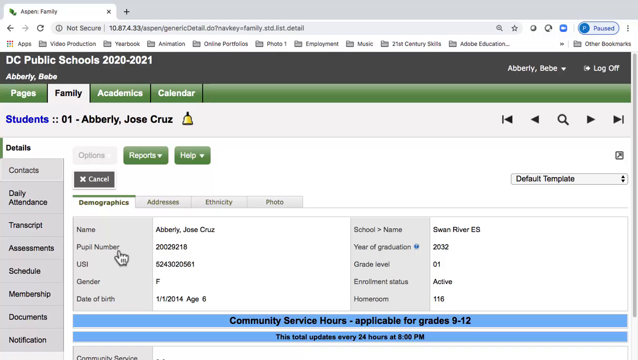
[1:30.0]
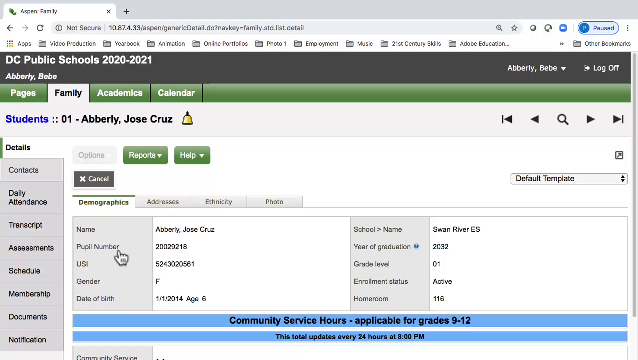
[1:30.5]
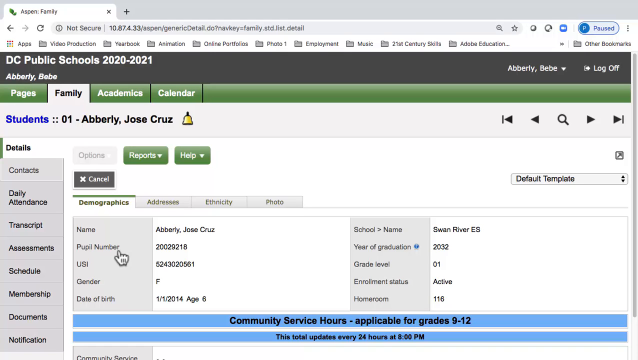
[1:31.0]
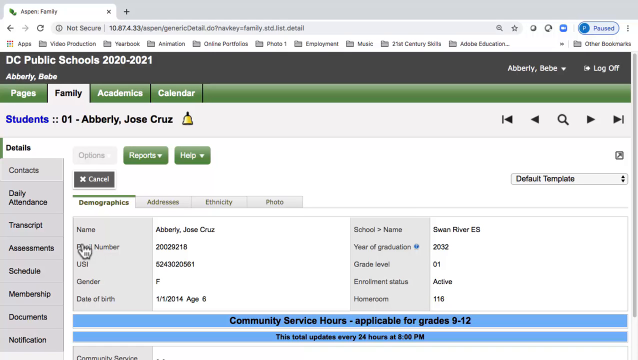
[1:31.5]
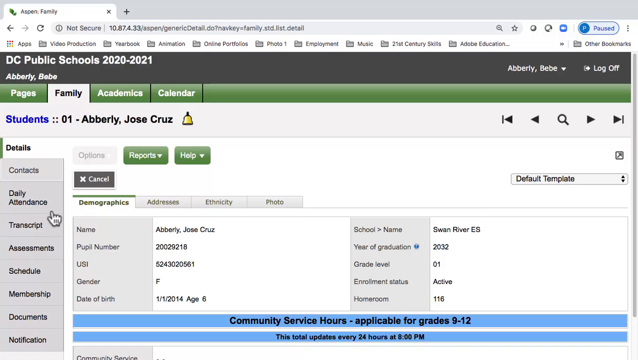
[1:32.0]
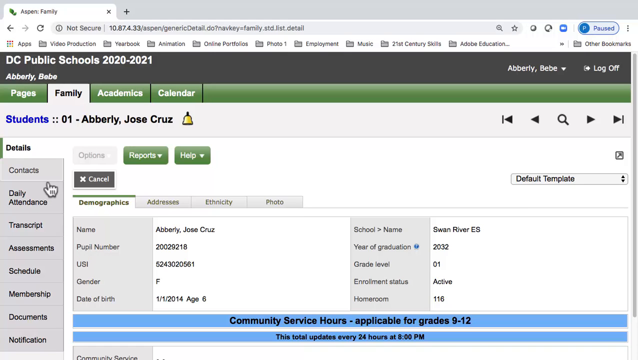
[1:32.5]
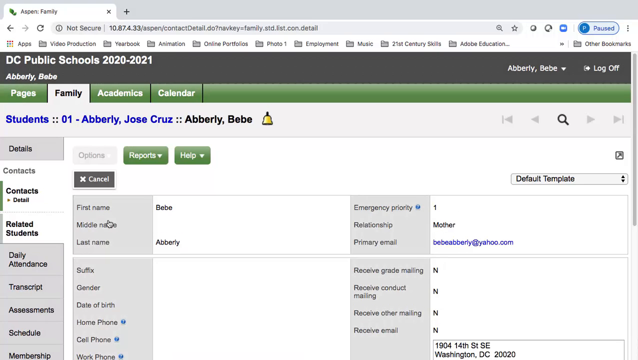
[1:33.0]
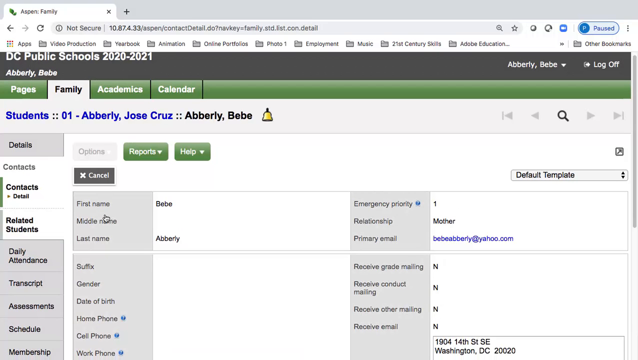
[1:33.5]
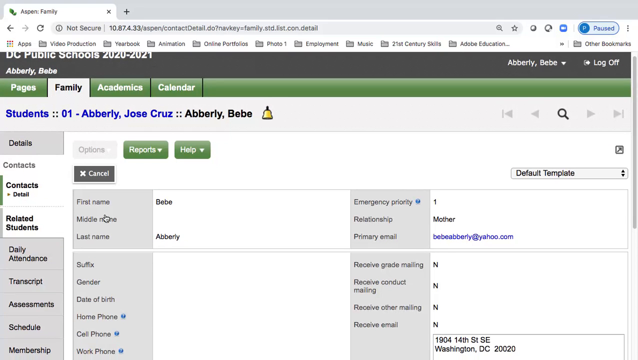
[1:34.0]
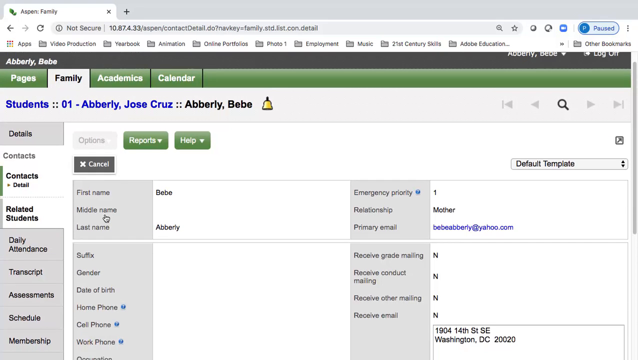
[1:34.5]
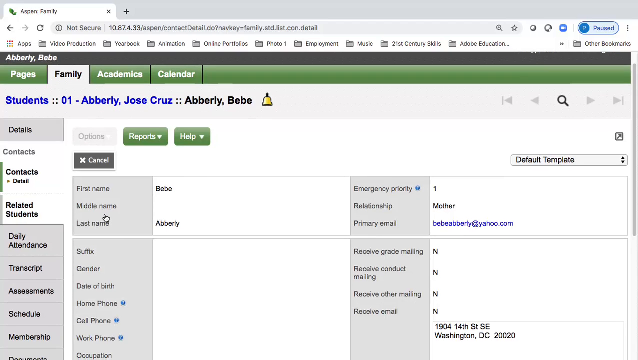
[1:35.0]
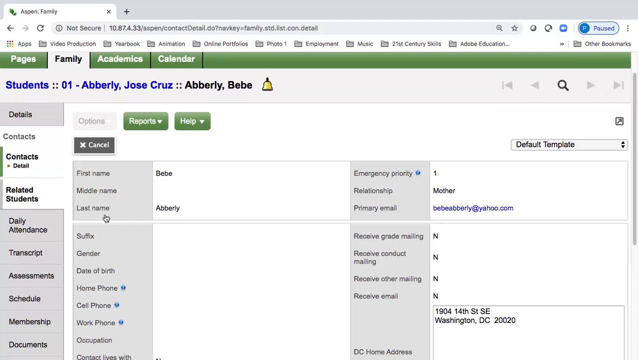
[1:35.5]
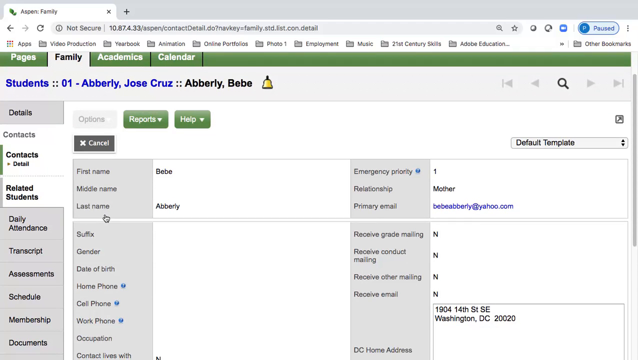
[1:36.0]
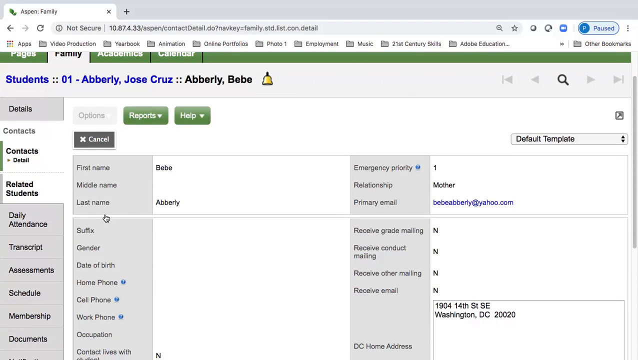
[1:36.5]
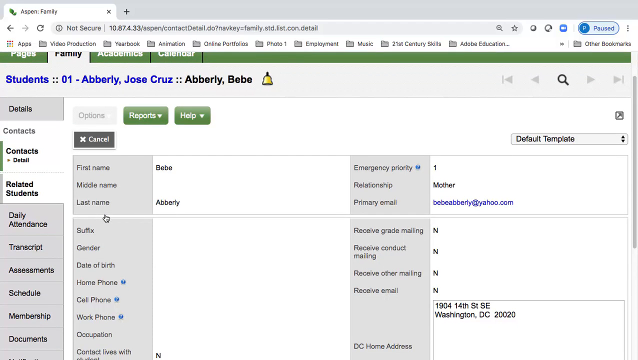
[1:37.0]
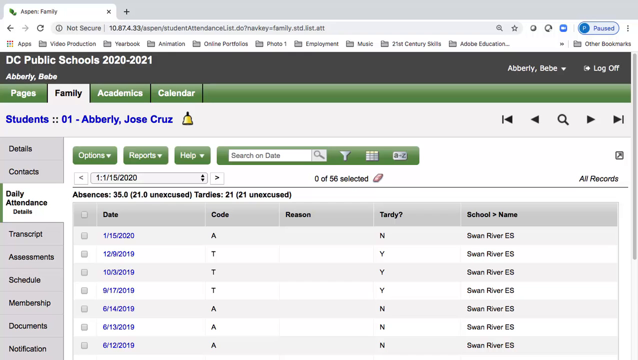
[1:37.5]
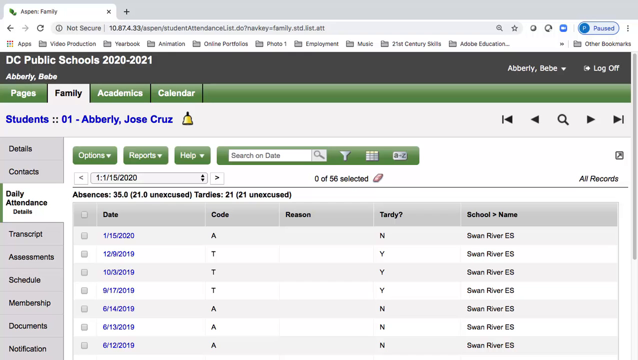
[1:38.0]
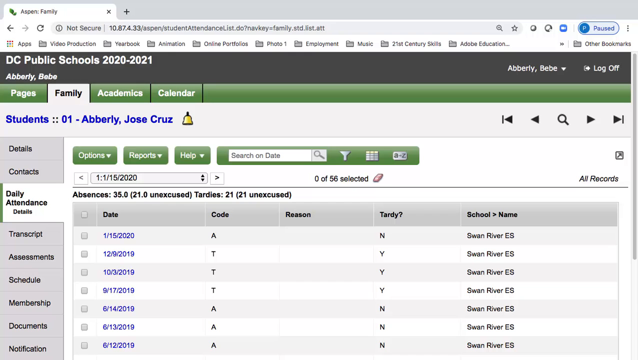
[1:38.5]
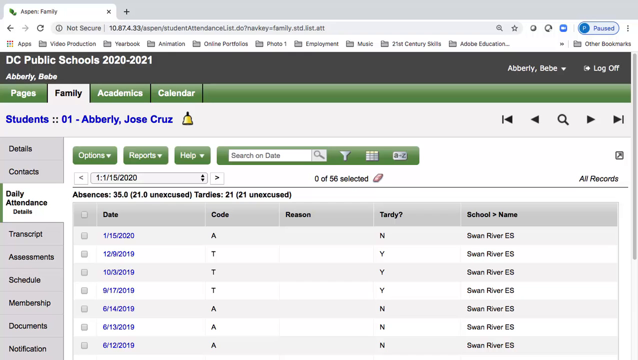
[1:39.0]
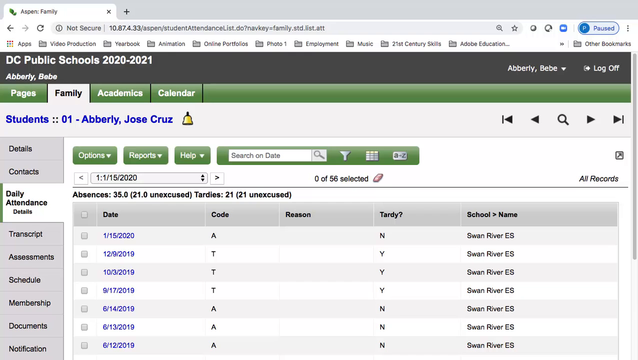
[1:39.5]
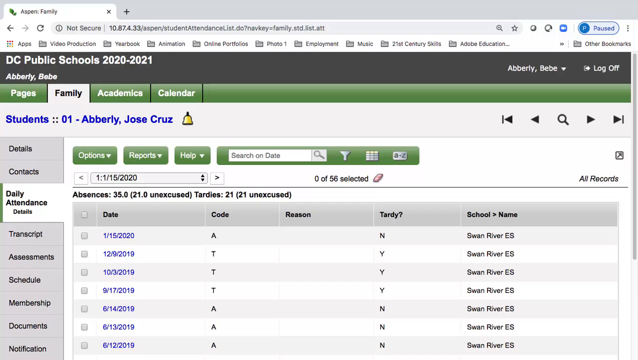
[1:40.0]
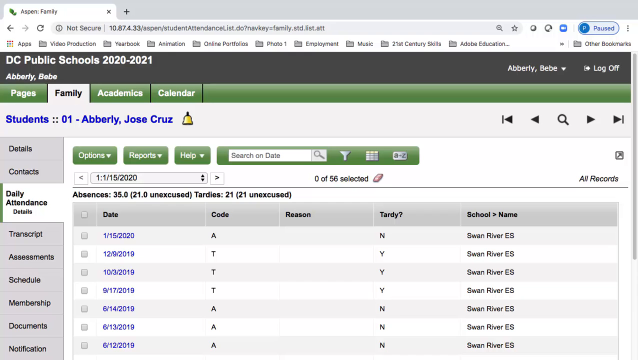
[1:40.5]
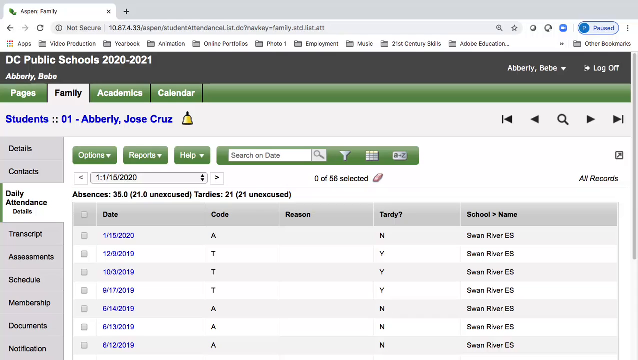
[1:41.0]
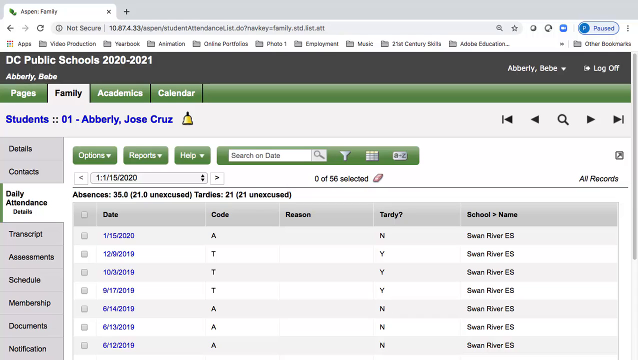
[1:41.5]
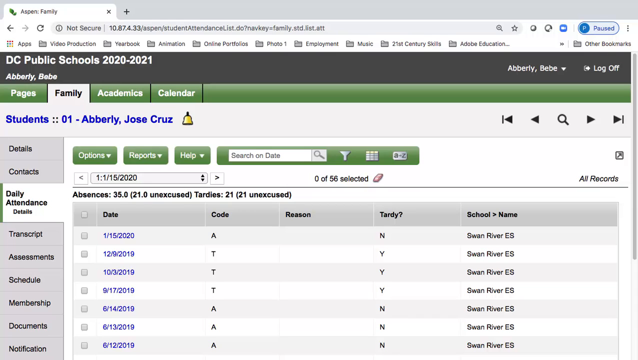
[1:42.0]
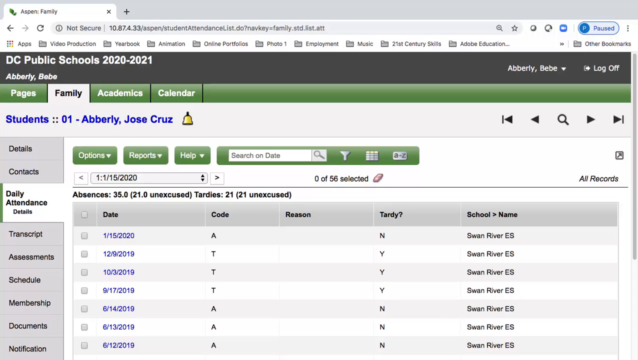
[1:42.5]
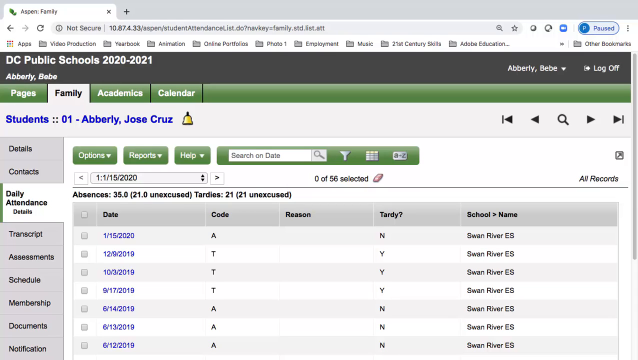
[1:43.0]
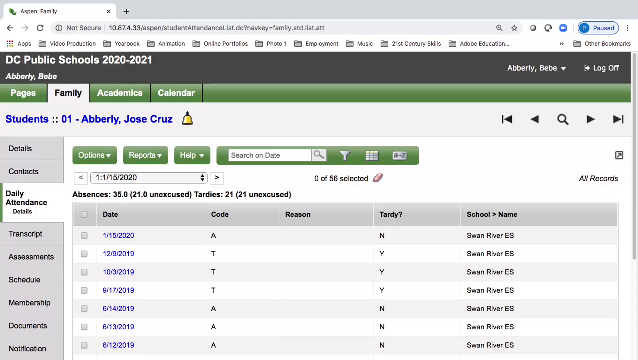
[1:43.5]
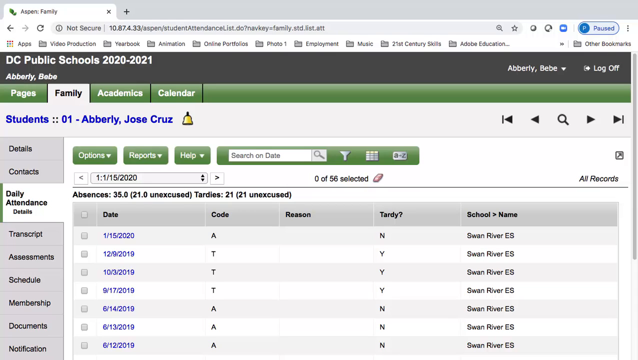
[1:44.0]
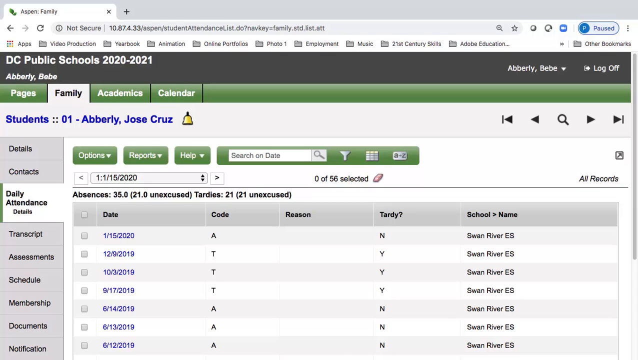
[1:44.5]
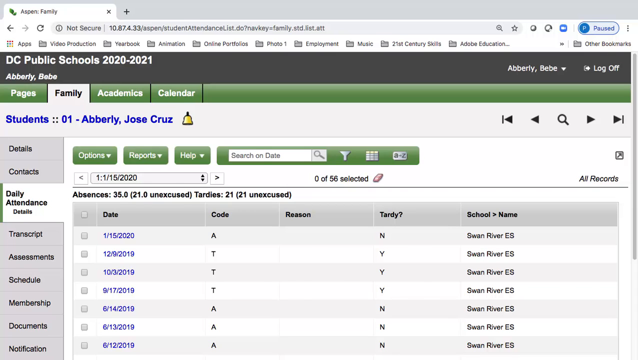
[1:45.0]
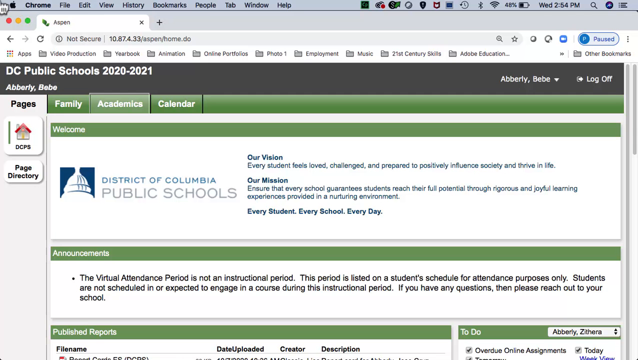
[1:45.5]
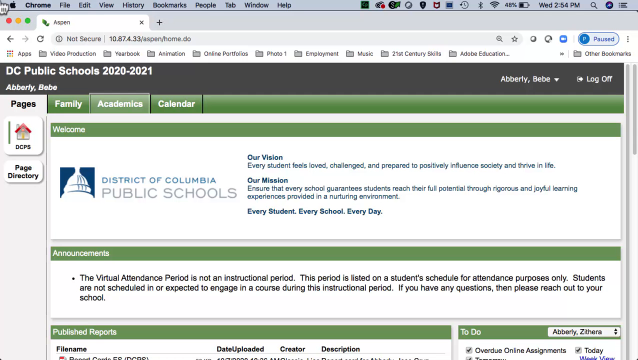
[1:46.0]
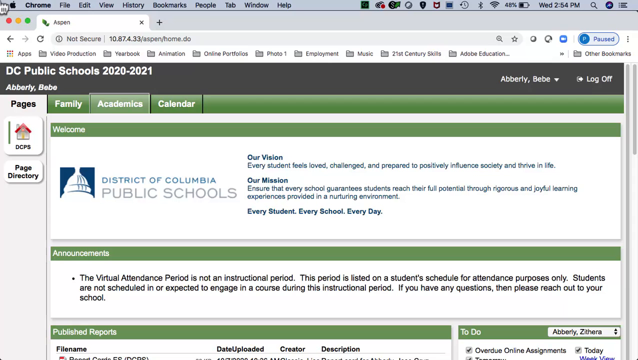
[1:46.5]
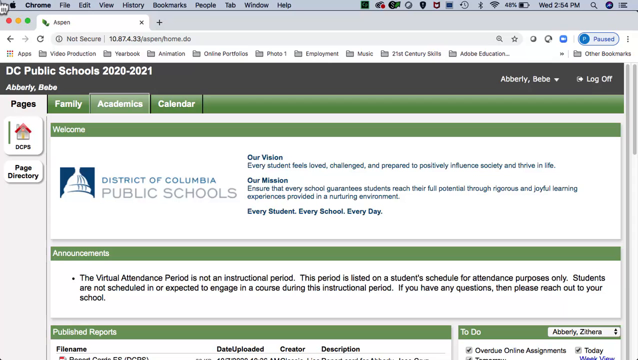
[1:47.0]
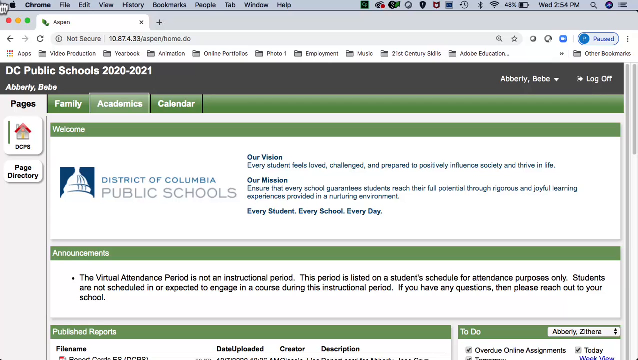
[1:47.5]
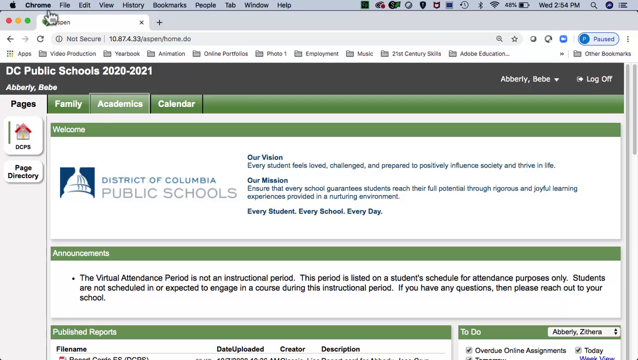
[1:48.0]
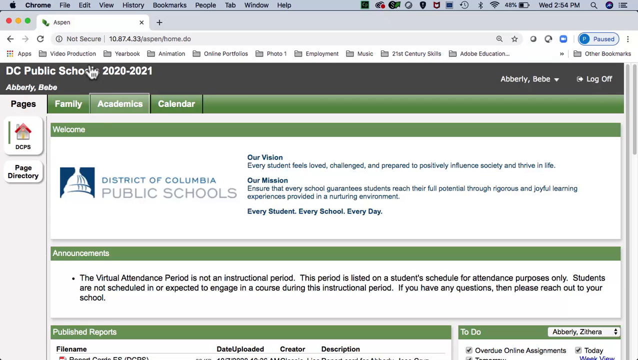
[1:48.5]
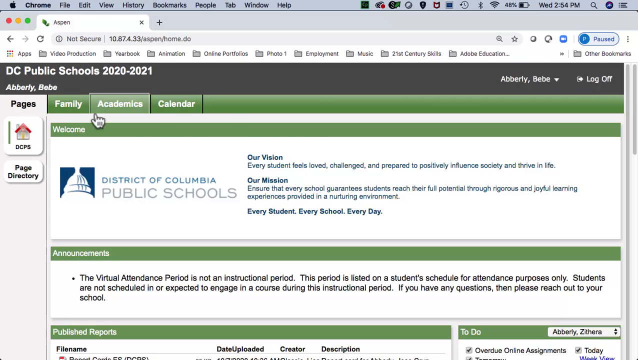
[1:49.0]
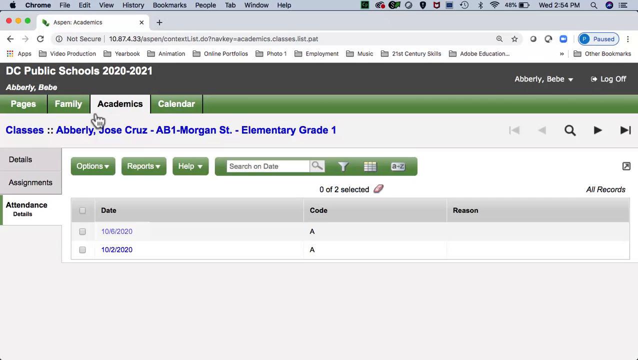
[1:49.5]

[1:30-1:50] The students tab shows "student 01 Averly Jose Cruz." The mouse starts over the pupil number section, then slowly moves up to the tabs on the left and clicks contacts, which has sub-options "contact details" and "release students." The contact section shows the name baby Averly, with fields for name suffix, gender, date of birth, number, and cell phone number; on the right are emergency priority, relationship, and primary email. Next it goes to the daily attendance section for the same student, listing date, code, reason, a tardy column with a question mark, and school name. It stays there for about five seconds, then returns to the home page showing the district, and the mouse scrolls down and clicks the academic button.